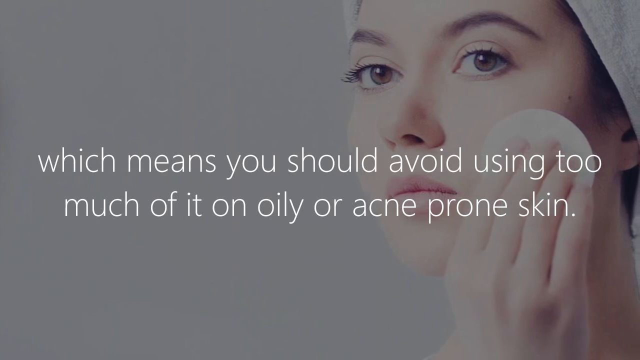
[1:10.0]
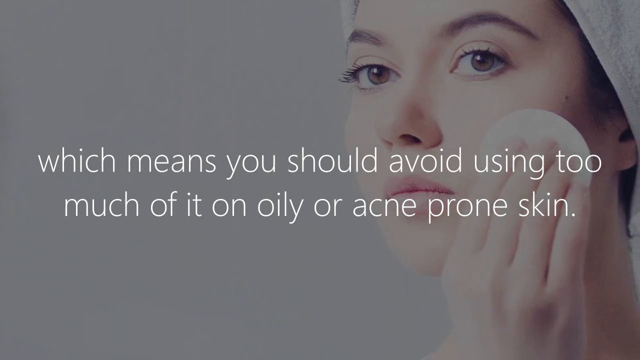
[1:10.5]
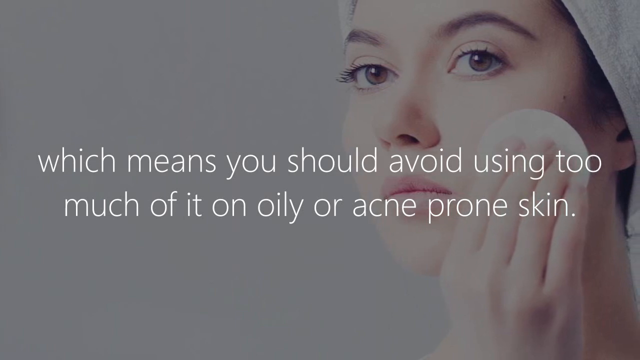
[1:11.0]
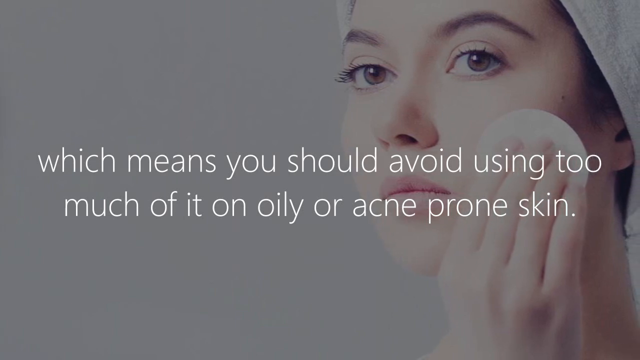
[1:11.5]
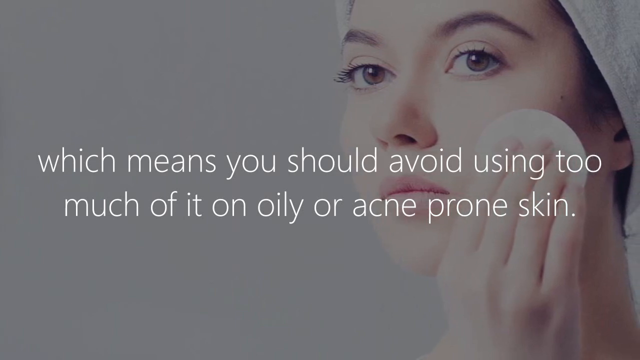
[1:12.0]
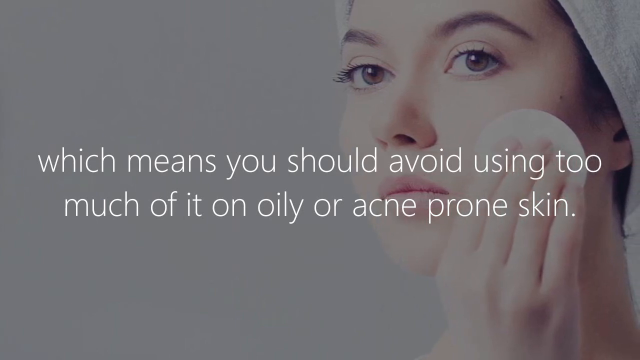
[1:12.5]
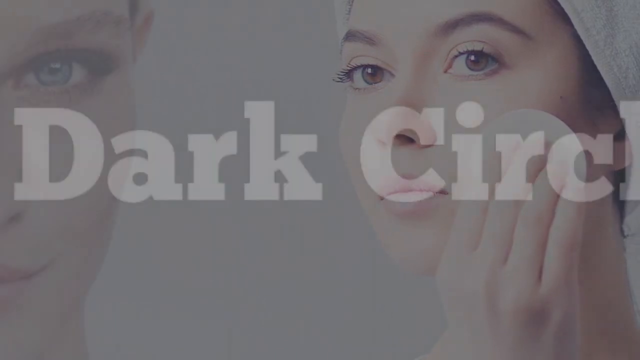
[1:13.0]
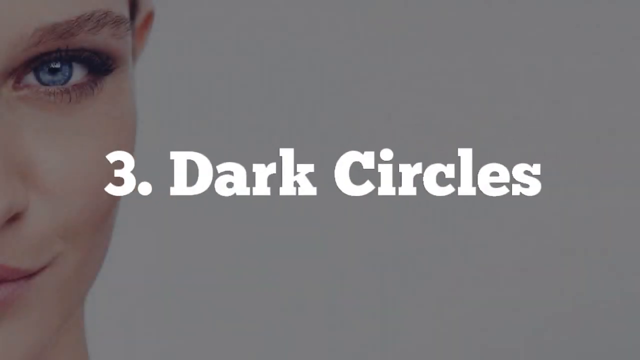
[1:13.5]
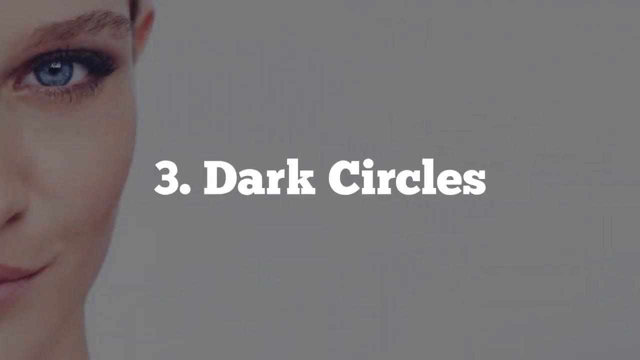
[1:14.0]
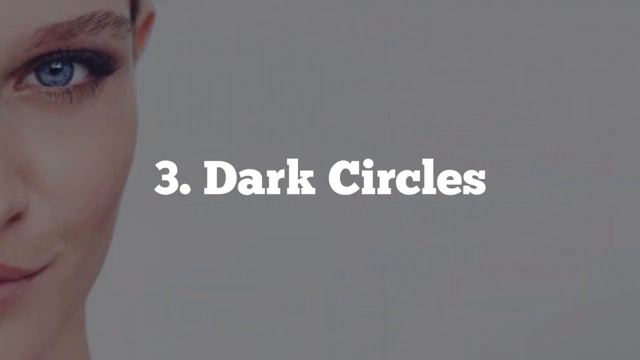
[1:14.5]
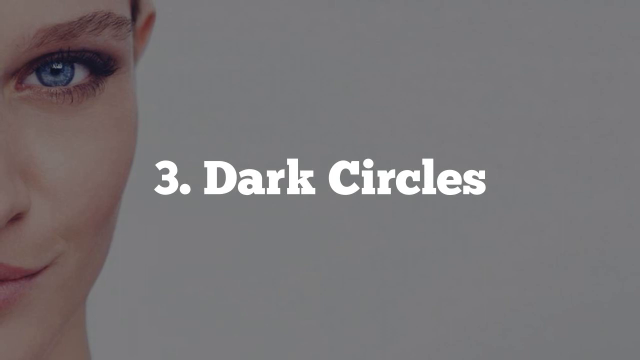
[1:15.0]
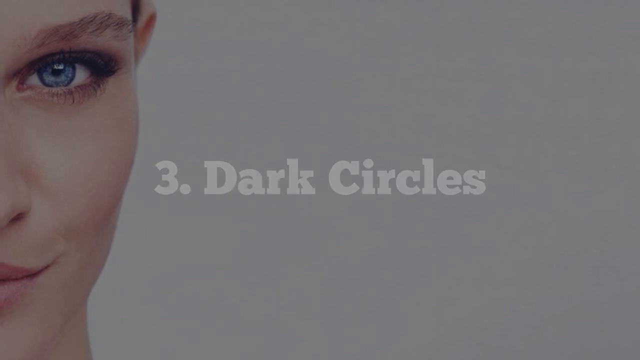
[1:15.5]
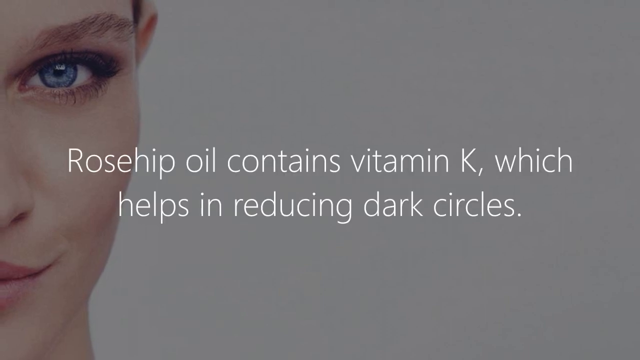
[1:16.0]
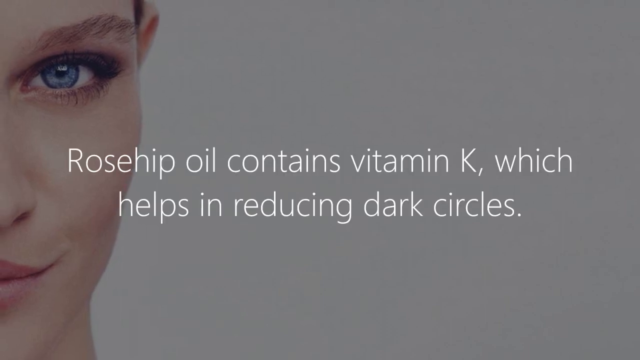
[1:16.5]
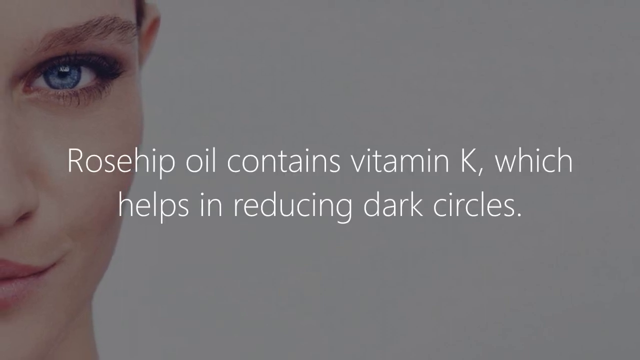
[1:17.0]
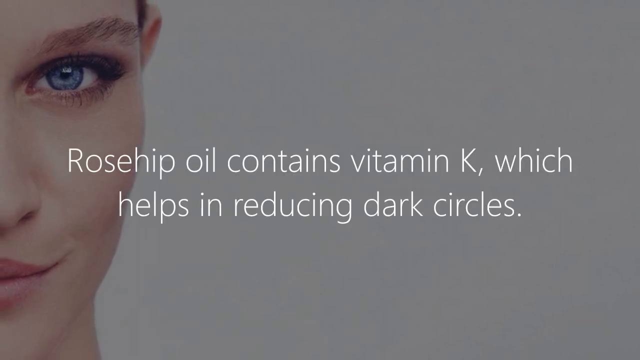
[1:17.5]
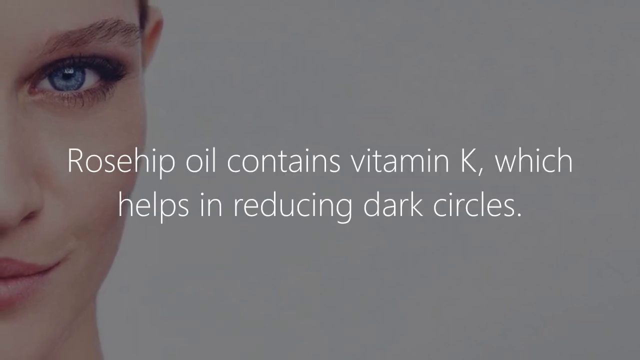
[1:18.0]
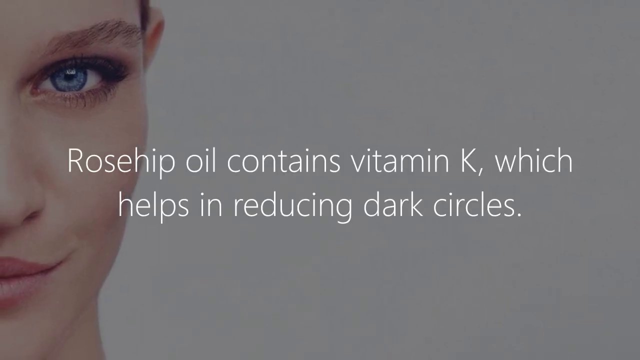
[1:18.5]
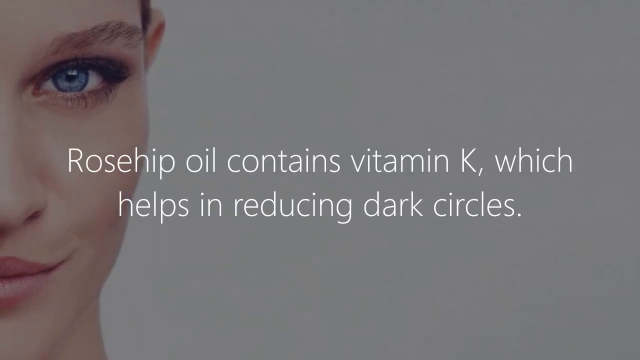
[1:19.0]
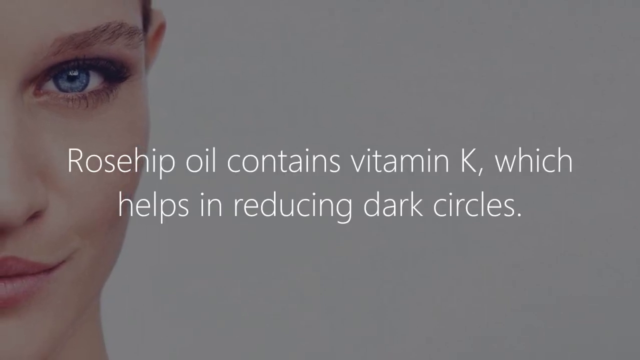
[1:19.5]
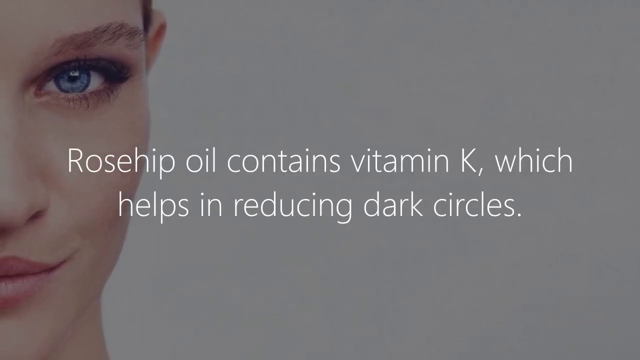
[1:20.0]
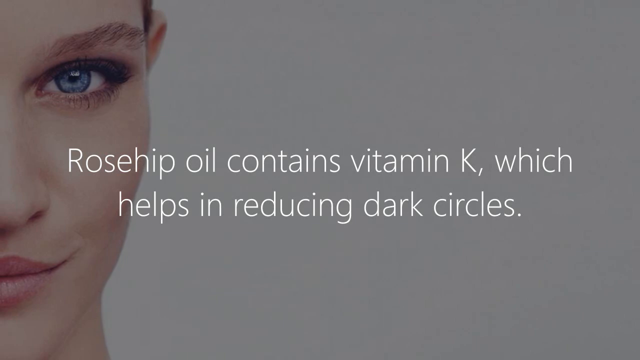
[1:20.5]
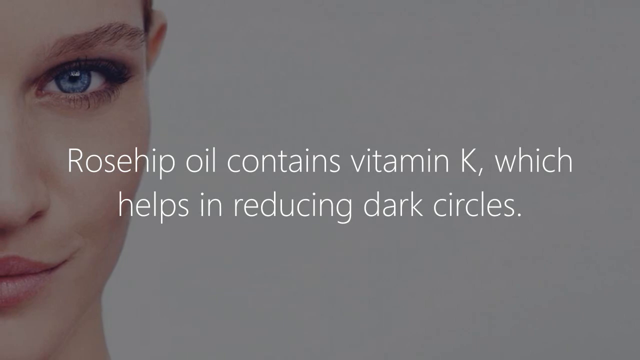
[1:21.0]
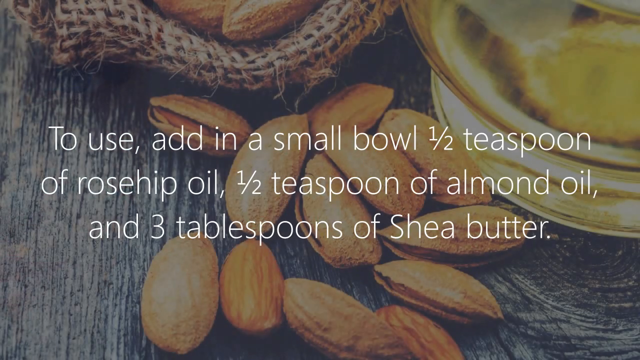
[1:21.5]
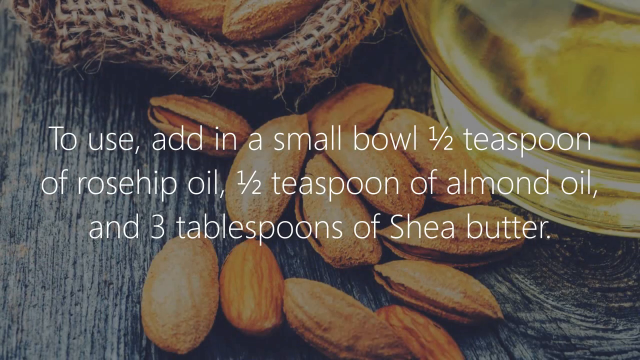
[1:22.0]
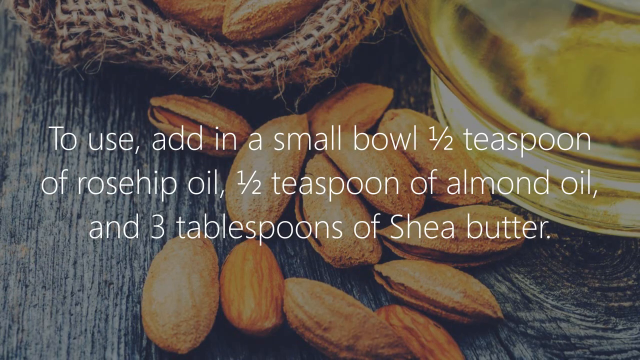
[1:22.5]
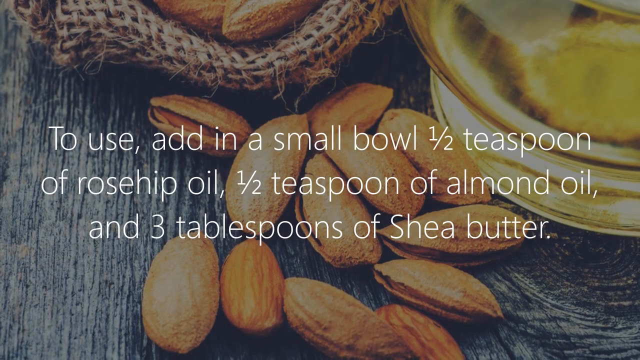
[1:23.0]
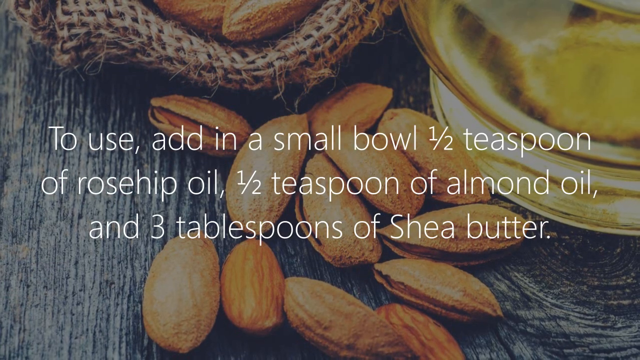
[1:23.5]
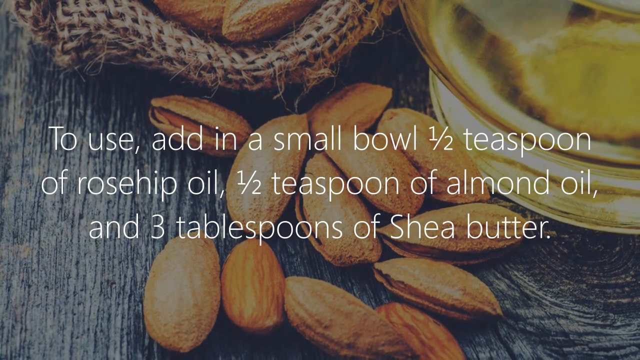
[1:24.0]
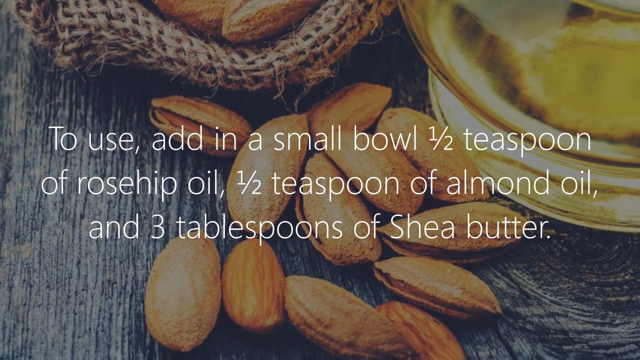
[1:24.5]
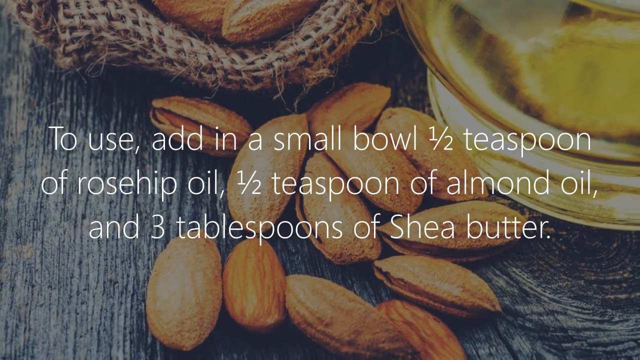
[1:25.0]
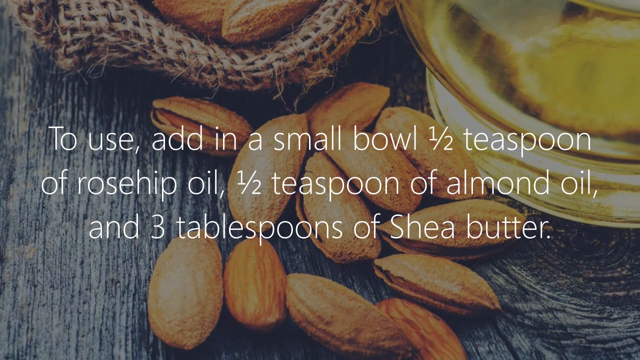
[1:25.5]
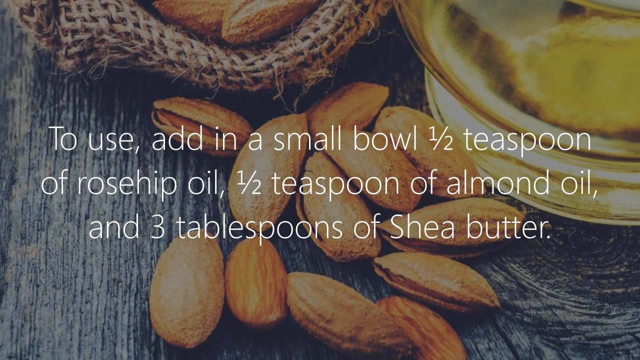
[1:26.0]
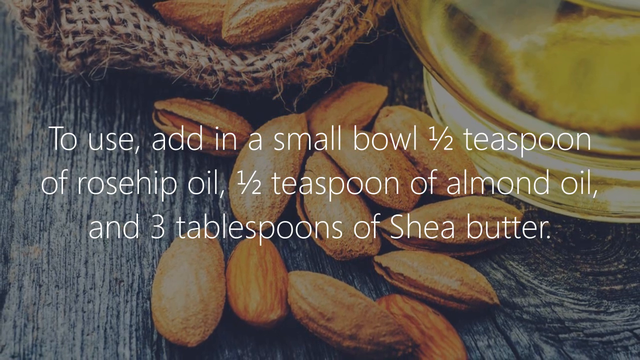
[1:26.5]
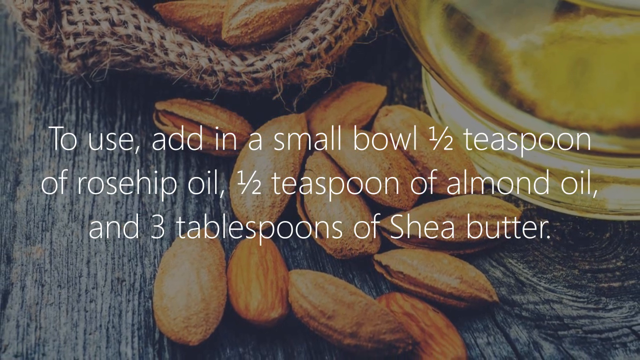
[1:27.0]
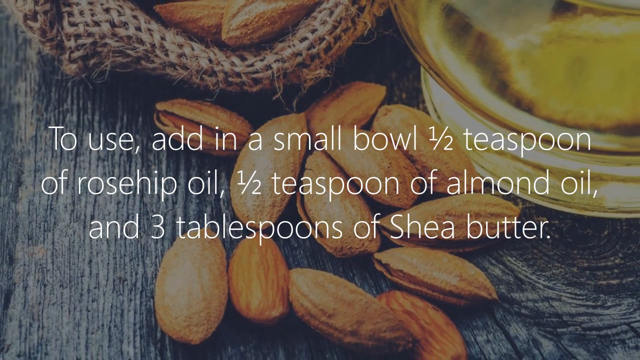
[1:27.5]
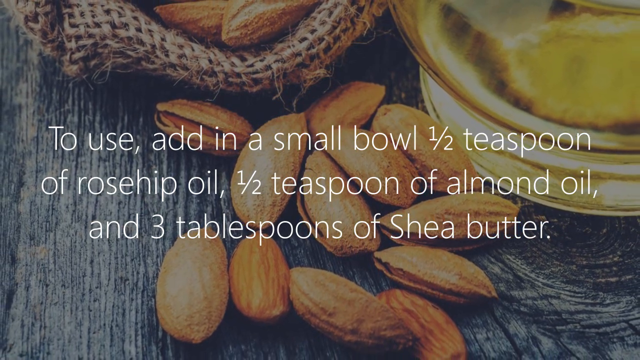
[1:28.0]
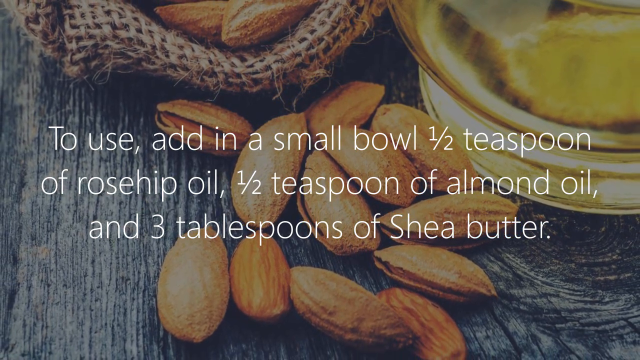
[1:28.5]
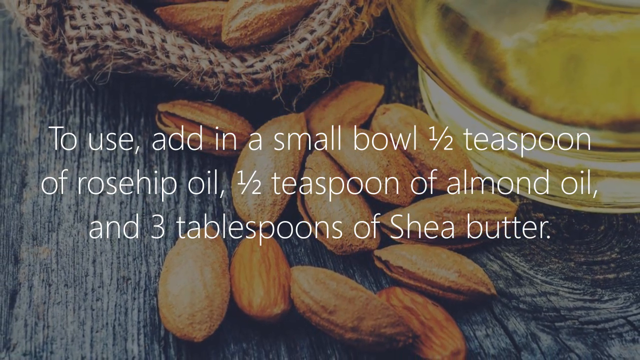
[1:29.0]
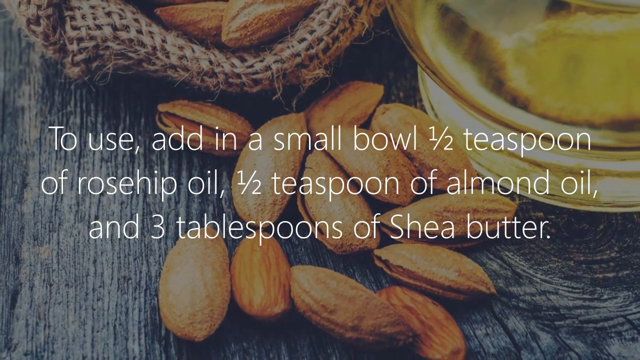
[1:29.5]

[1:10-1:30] The topic of acne scars continues, and people are shown applying the oil onto their skin.